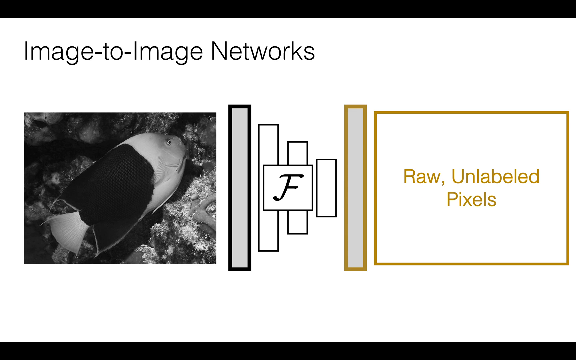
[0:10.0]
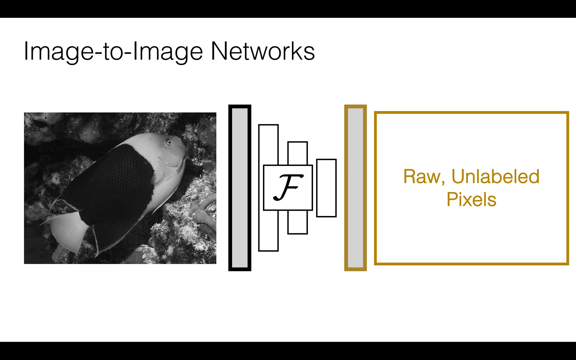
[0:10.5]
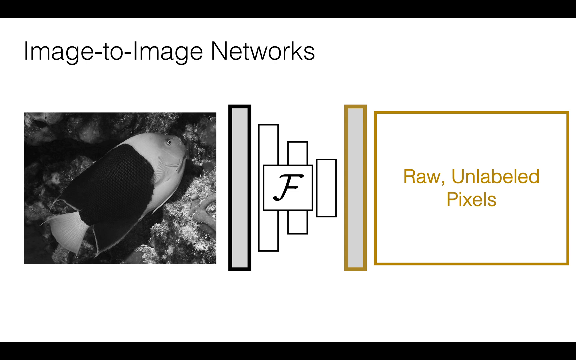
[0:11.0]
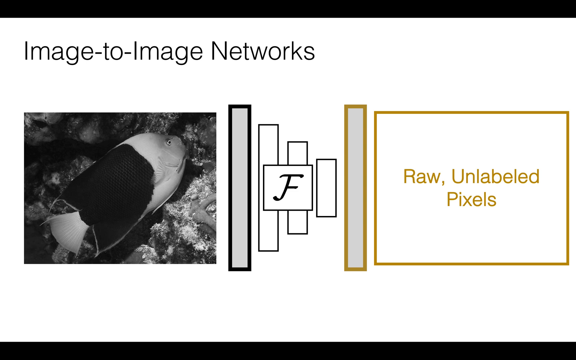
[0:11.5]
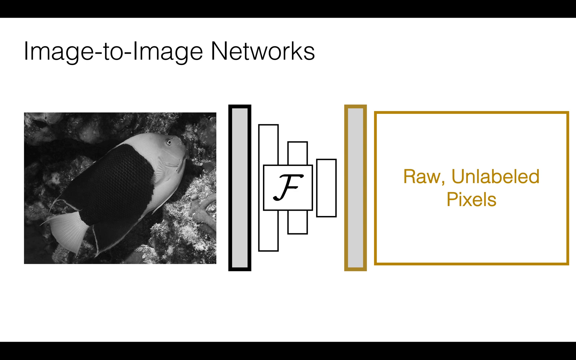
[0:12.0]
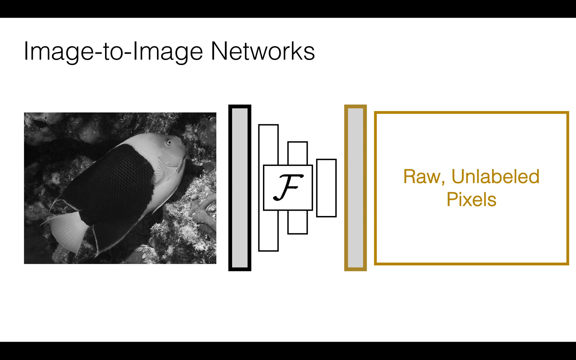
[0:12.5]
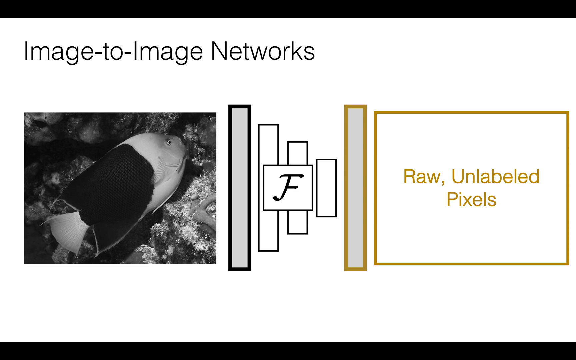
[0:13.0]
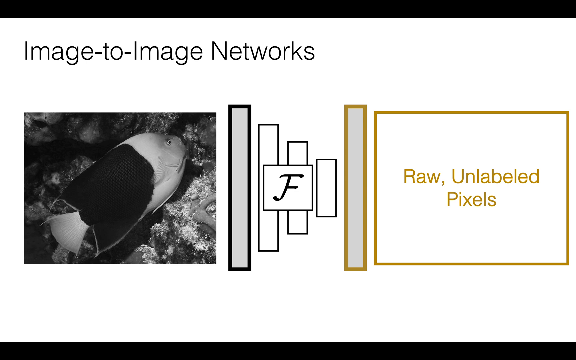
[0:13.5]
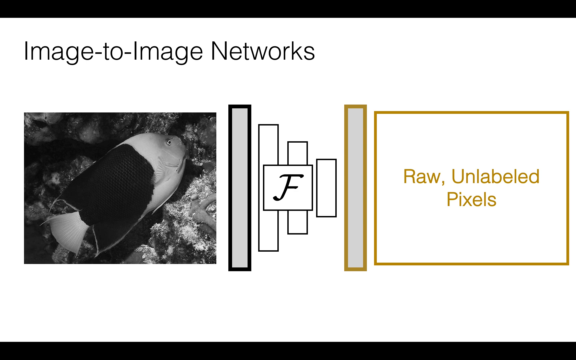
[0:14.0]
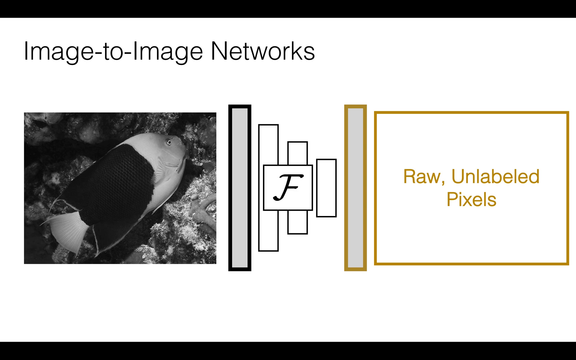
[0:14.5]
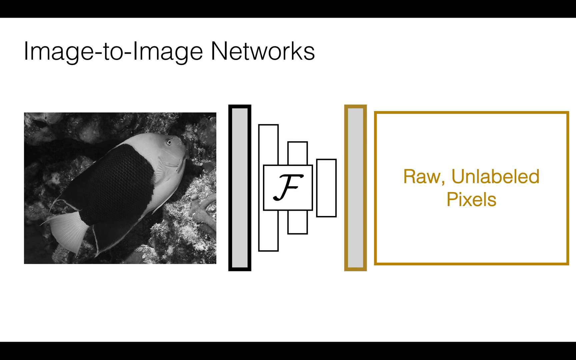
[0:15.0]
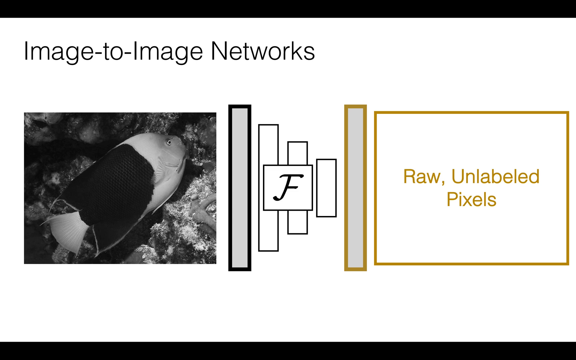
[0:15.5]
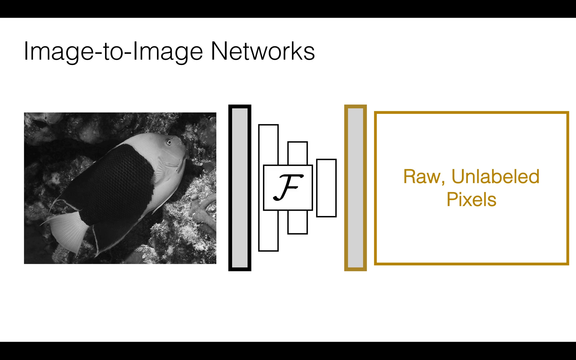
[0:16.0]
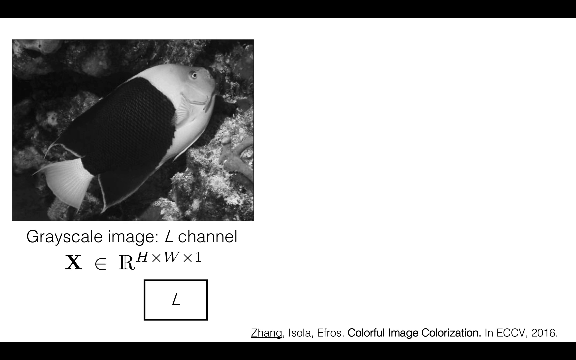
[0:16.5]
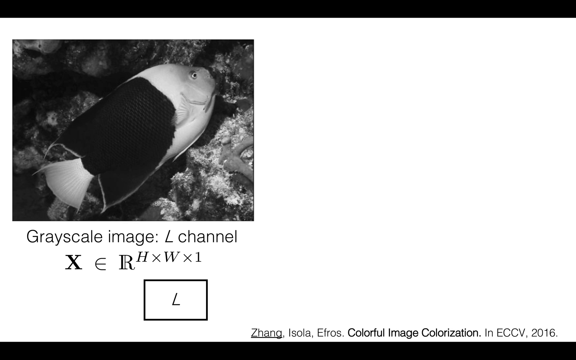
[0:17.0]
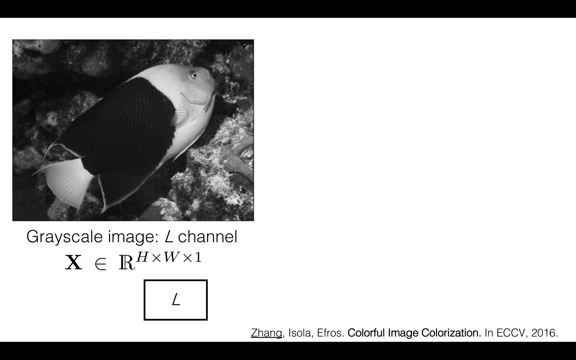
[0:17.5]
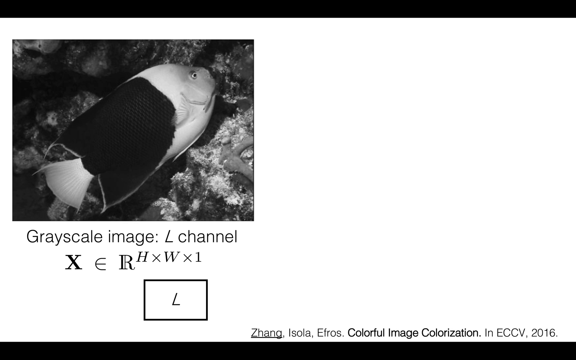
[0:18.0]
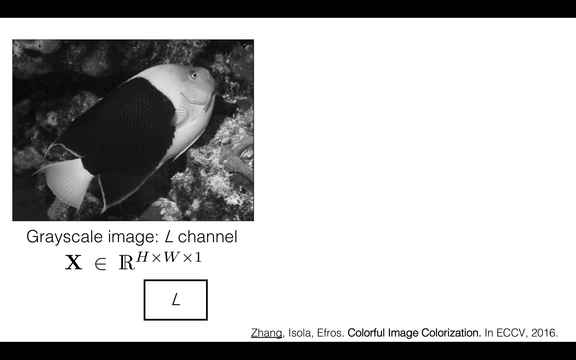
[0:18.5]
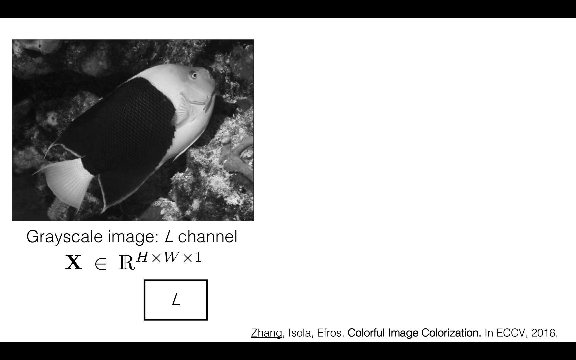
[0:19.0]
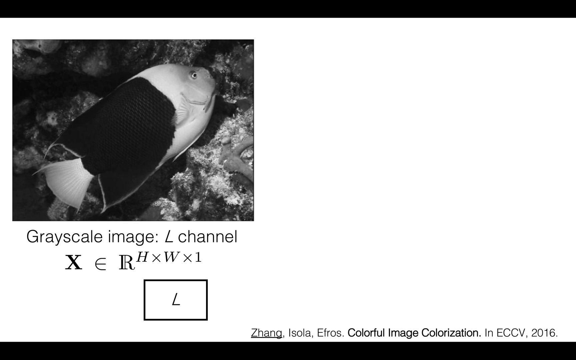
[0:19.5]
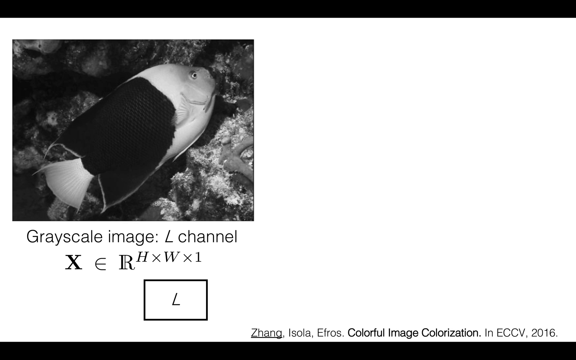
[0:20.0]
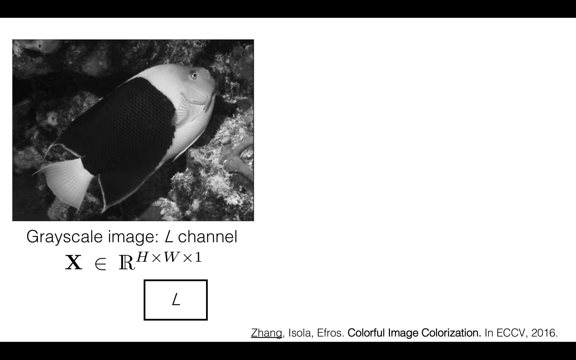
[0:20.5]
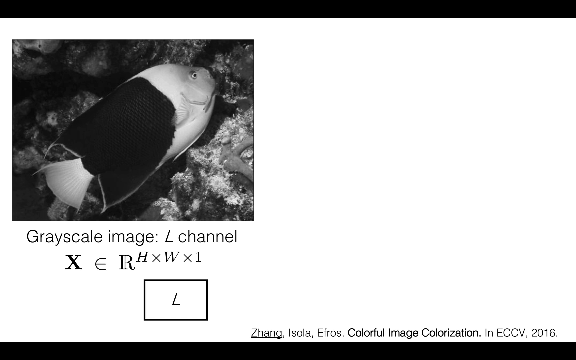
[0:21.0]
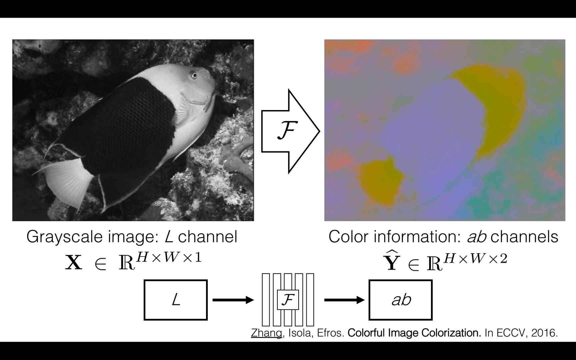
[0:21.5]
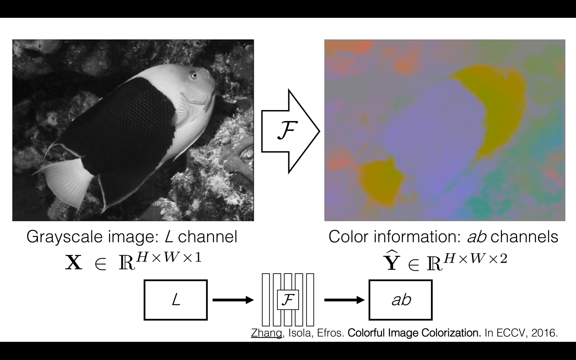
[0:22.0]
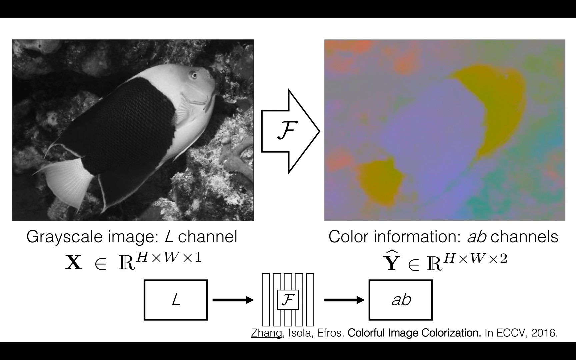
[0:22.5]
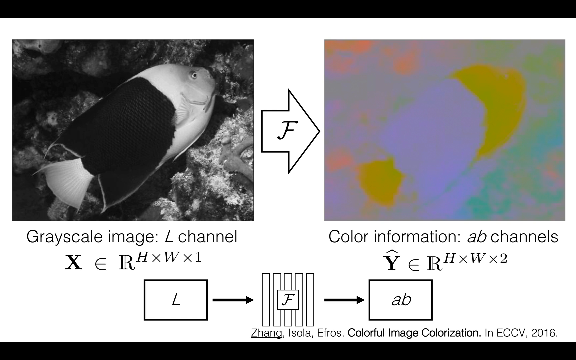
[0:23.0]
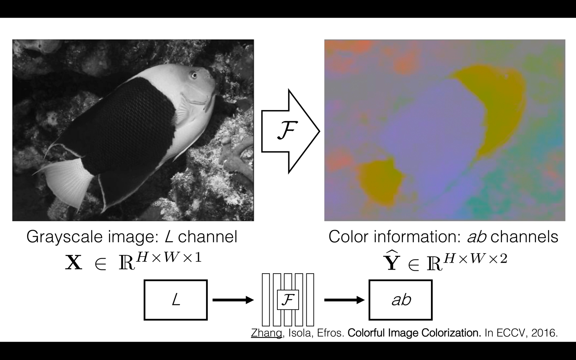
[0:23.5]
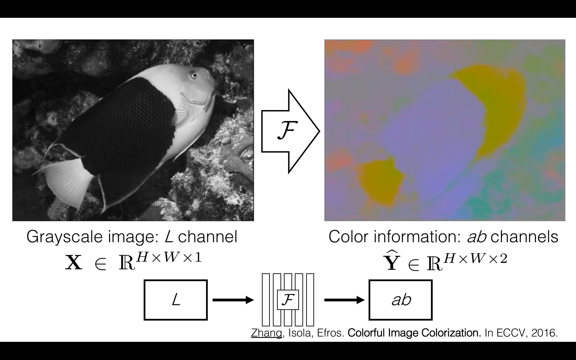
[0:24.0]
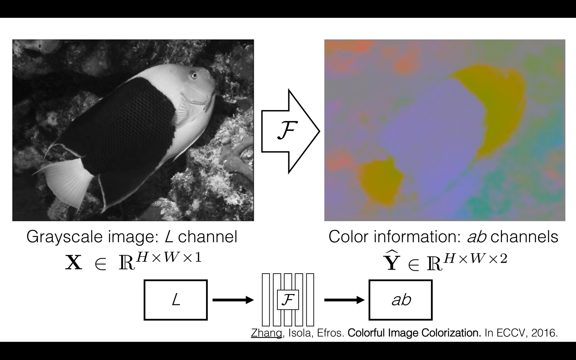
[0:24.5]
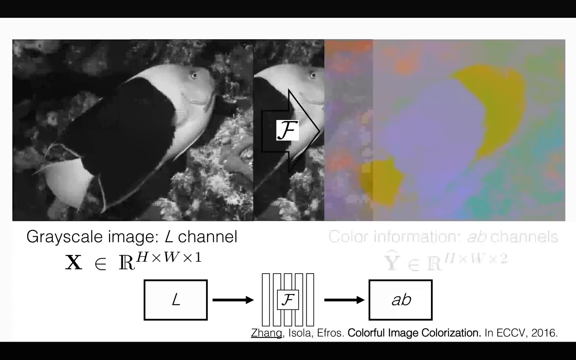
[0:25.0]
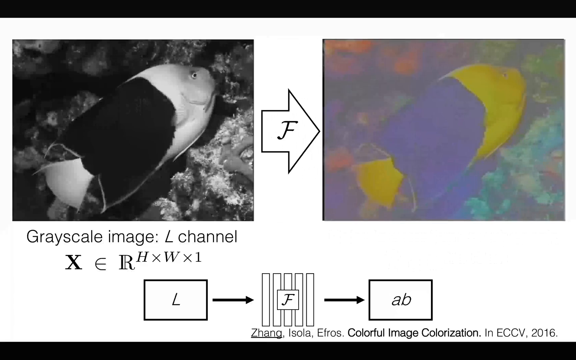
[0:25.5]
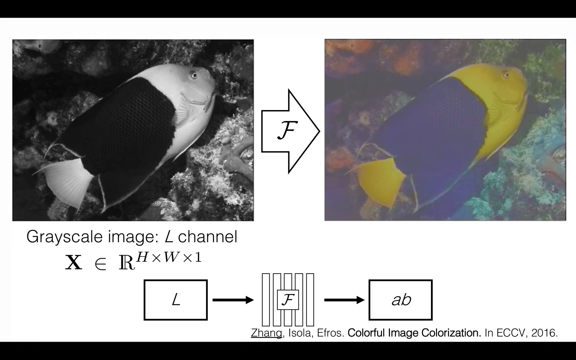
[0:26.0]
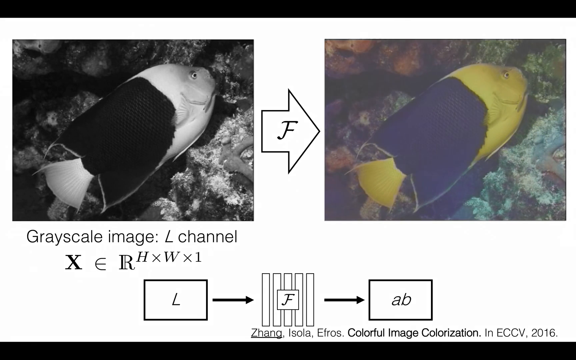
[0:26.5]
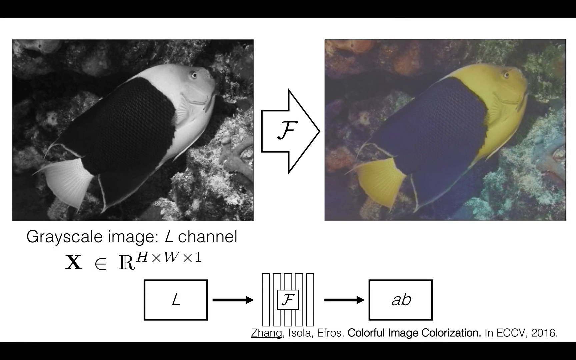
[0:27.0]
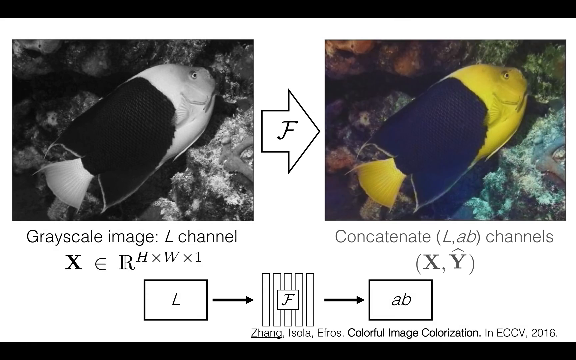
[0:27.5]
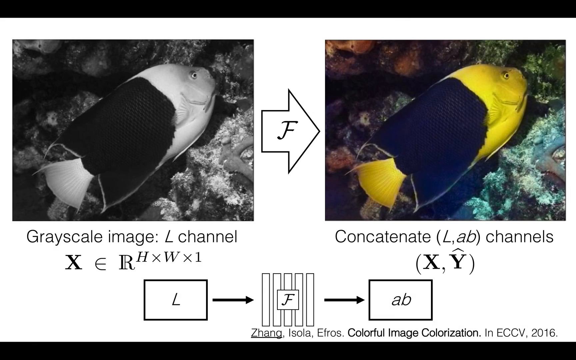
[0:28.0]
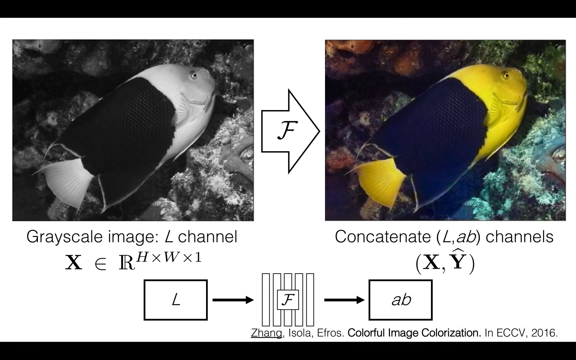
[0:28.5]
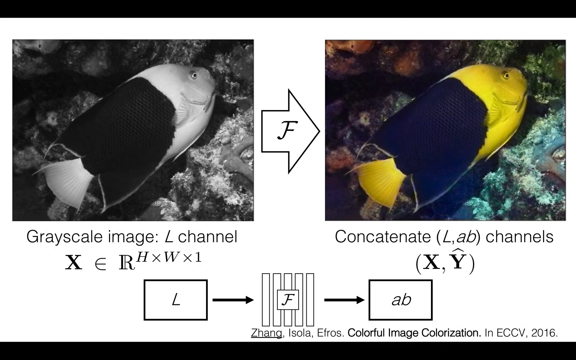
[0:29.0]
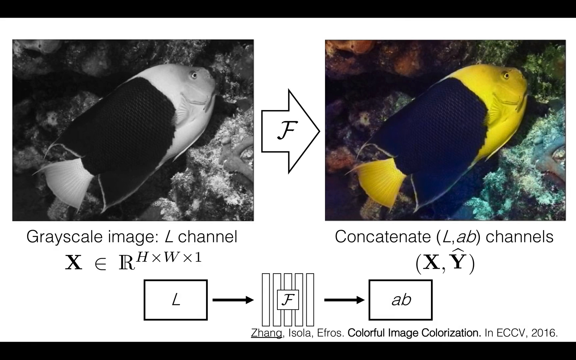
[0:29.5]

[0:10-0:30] On the left, in a square box, is a black-and-white image of a fish with a large black body on its right side, a white tail fin and white near its head. To the right is a sort of sideways pyramid made of rectangle shapes; one rectangle has a black border on its bottom portion and is filled in with gray. On the far right is a yellow-bordered square box that reads "raw unlabeled pixels." In between, on top of the sideways pyramid, is the letter F. The screen holds for a little while, with text in the top left stating "image to image networks." The scene then changes to the same fish on the left against a white background, with "grayscale image L channel" written beneath it. Below that is some fancy lettering like a formula, and under the formula is a square box reading "L." A black arrow points right to five vertical rectangles with an F square inside, then another black arrow points to a square reading "AB." Above that is a box filled with different colors, including purple, yellow and green, and beneath that box is the text "color information AB channels." The black-and-white fish on the left then kind of hovers over the AB channel on the right, forming a colored picture.